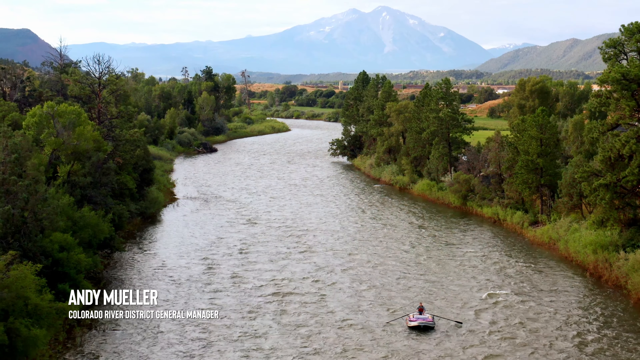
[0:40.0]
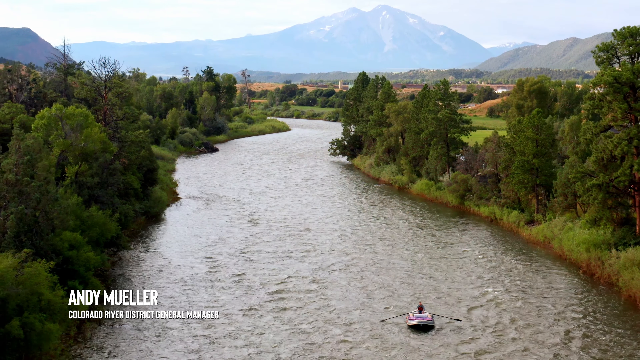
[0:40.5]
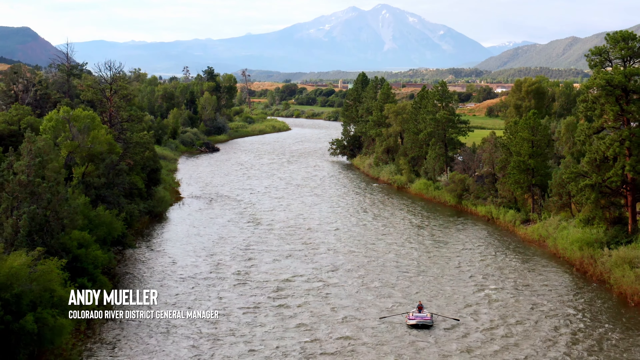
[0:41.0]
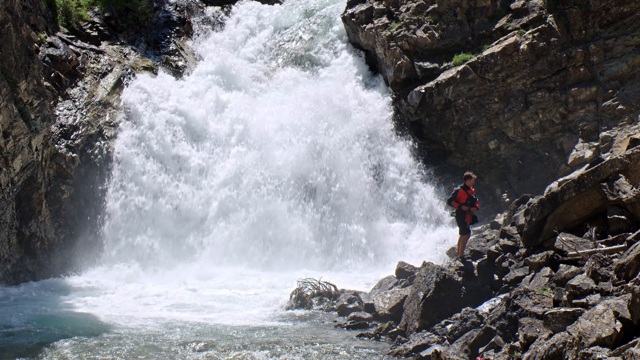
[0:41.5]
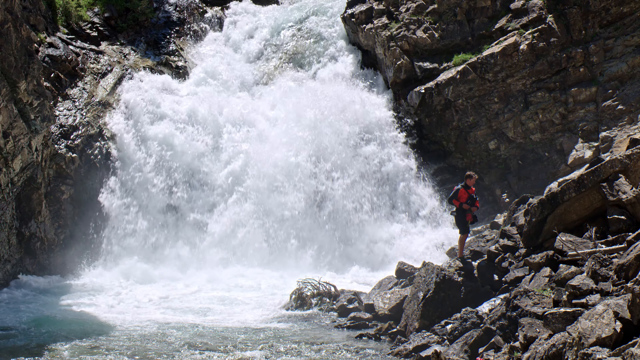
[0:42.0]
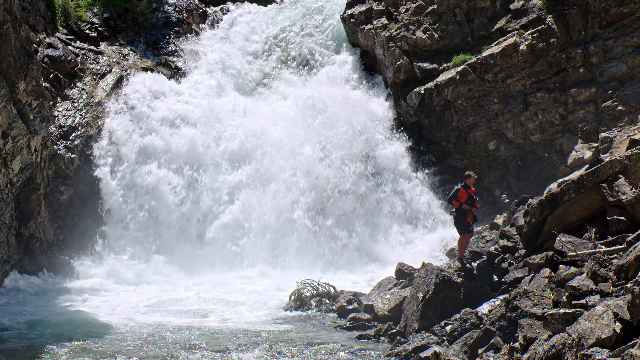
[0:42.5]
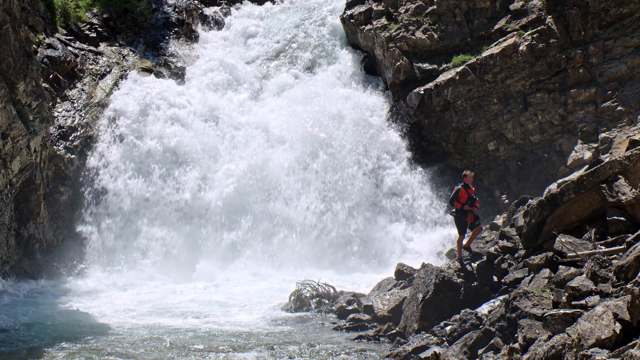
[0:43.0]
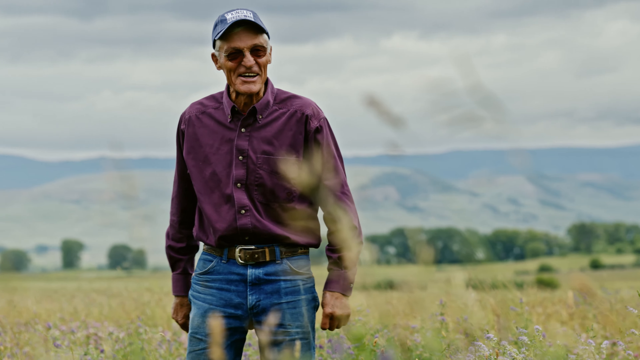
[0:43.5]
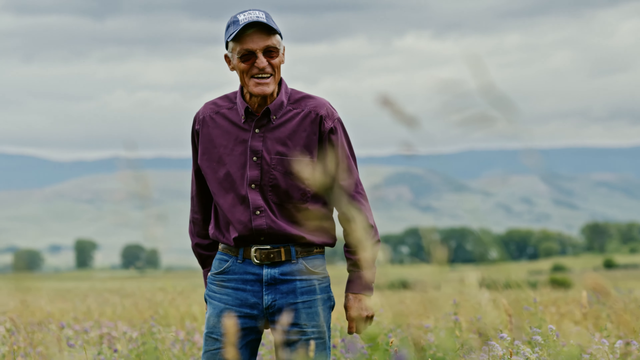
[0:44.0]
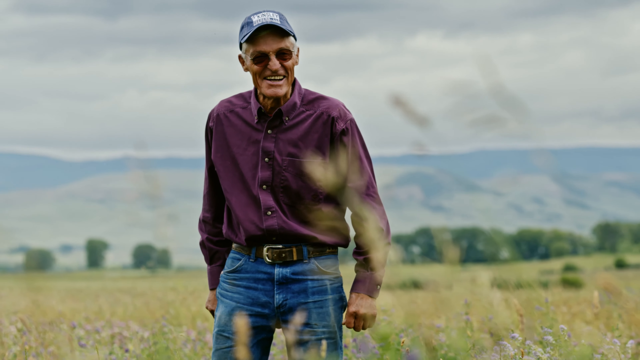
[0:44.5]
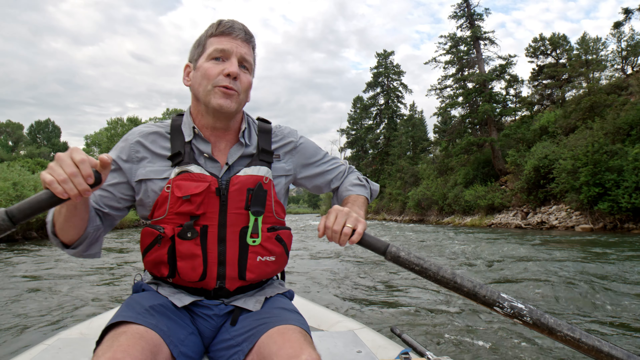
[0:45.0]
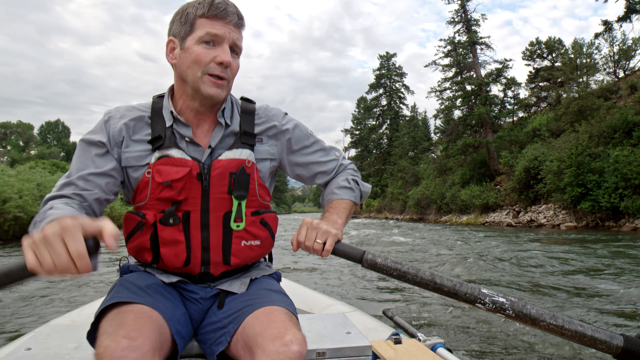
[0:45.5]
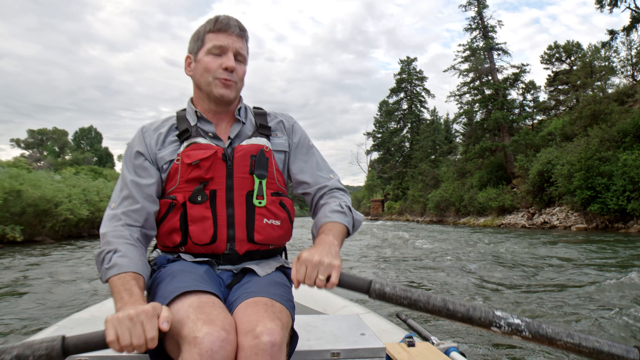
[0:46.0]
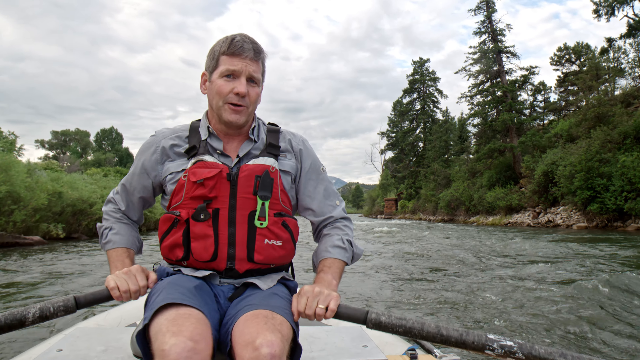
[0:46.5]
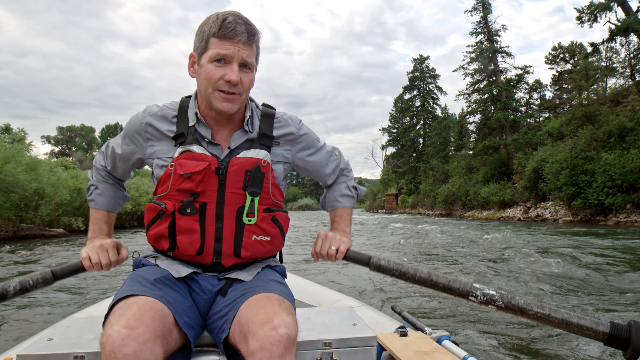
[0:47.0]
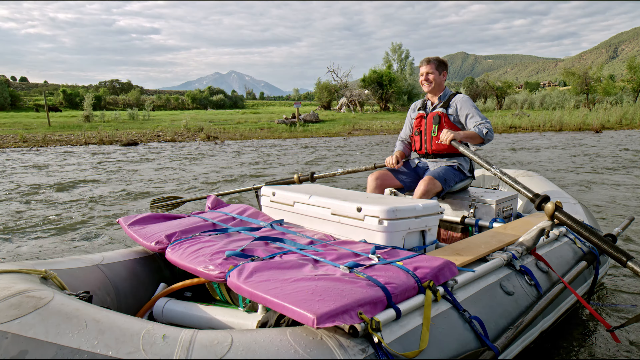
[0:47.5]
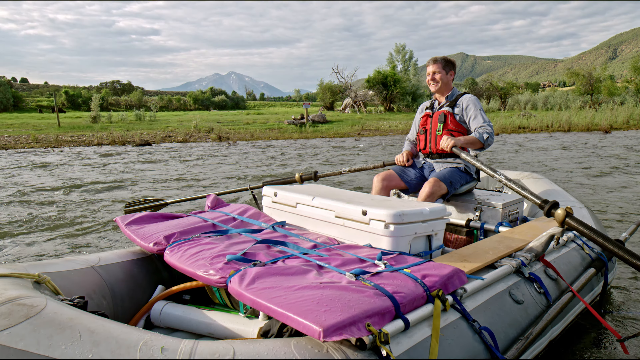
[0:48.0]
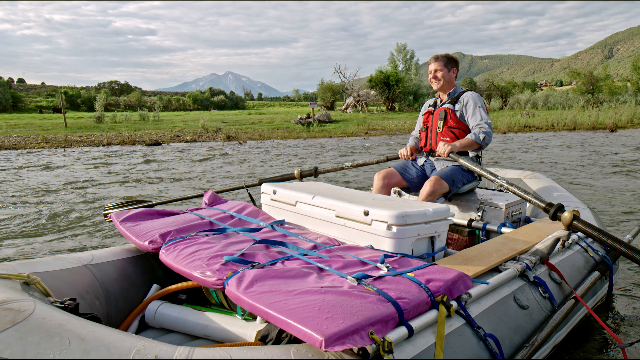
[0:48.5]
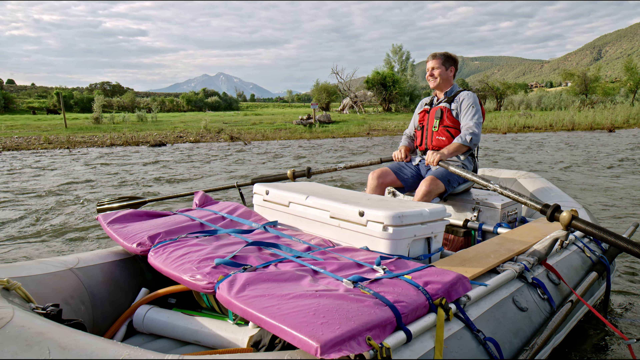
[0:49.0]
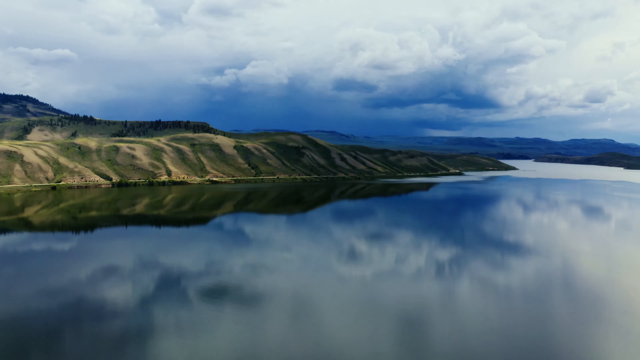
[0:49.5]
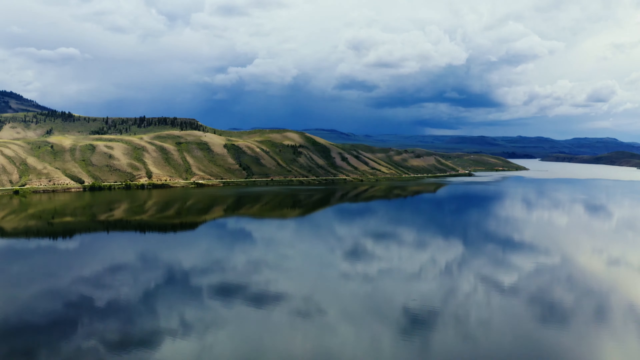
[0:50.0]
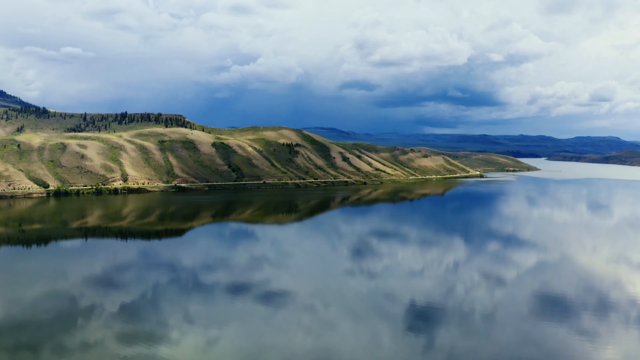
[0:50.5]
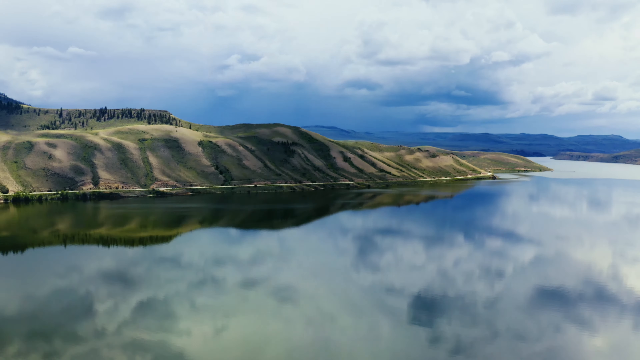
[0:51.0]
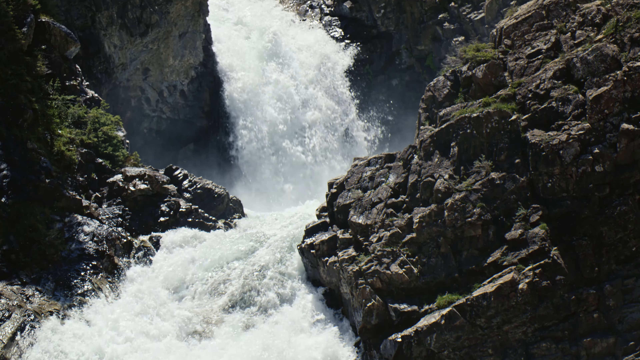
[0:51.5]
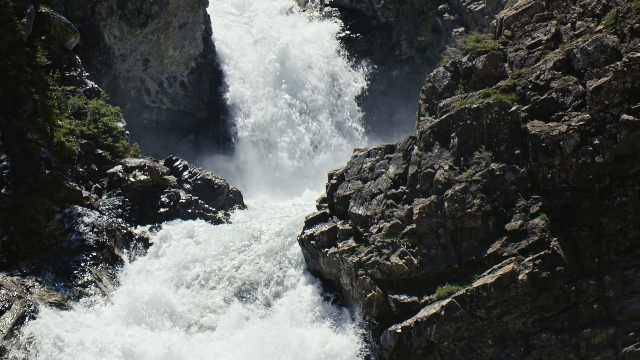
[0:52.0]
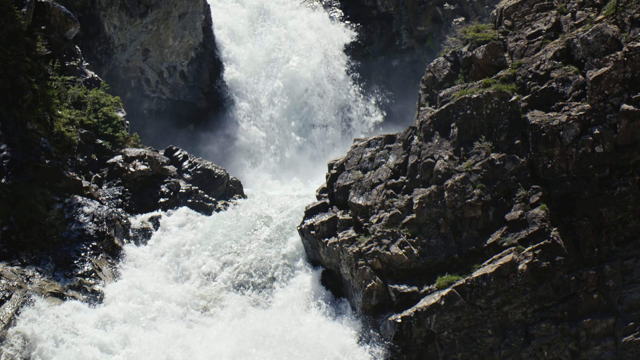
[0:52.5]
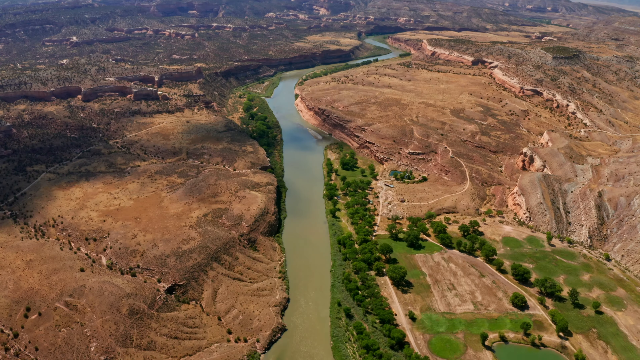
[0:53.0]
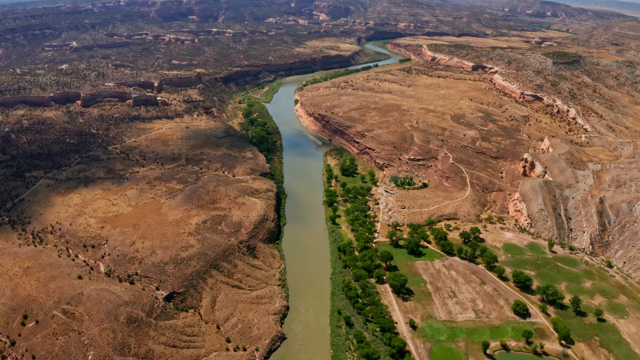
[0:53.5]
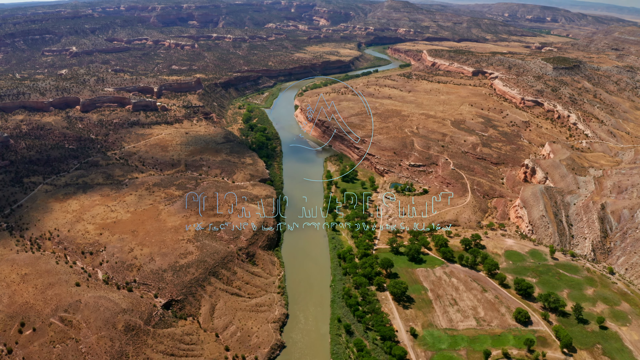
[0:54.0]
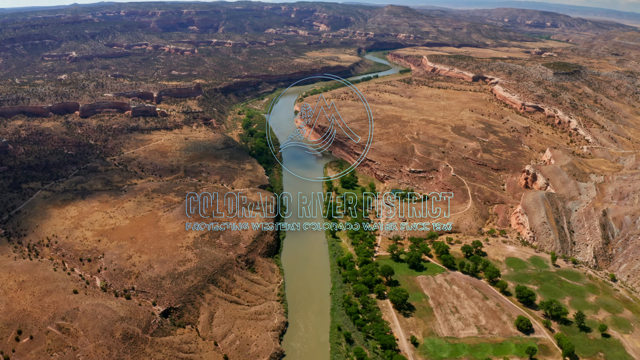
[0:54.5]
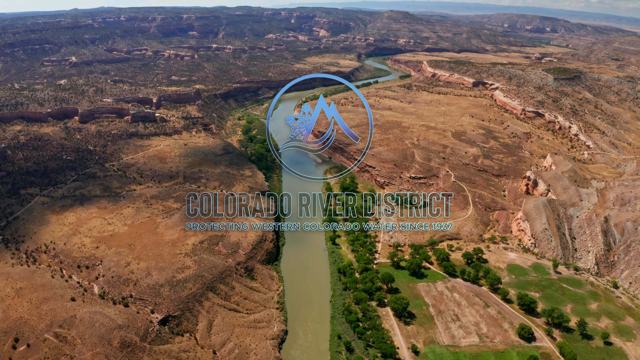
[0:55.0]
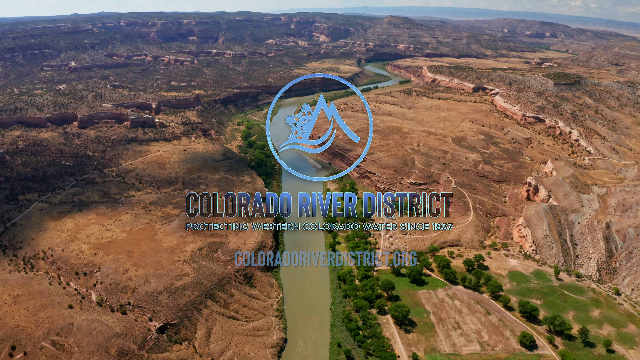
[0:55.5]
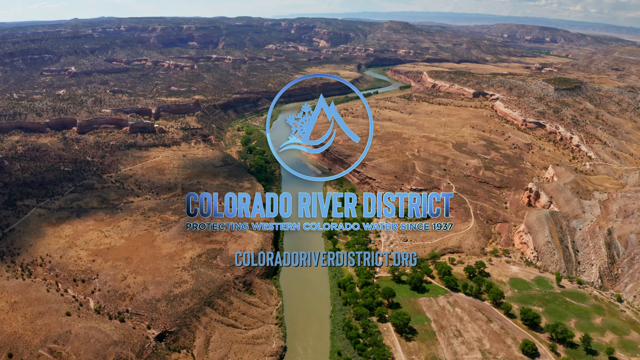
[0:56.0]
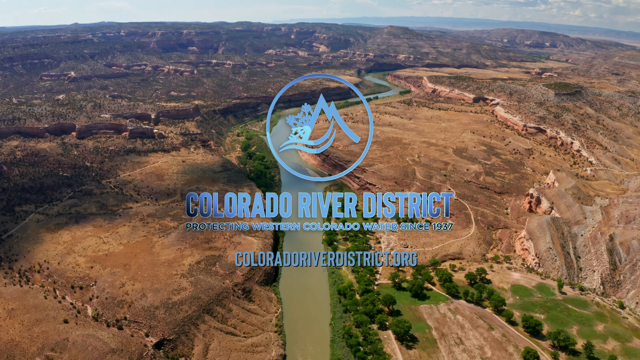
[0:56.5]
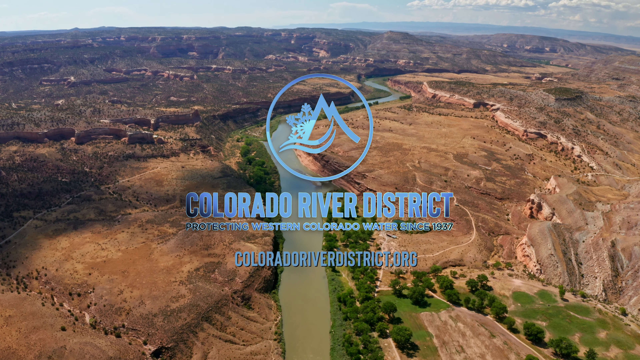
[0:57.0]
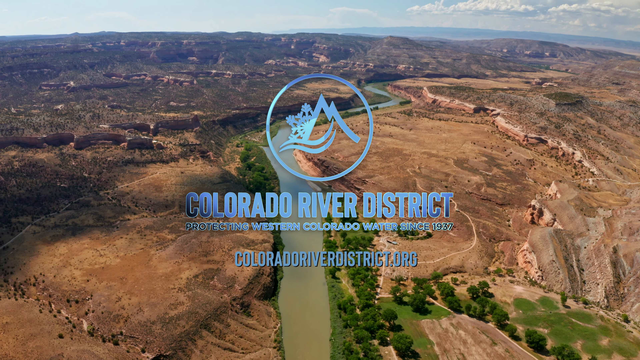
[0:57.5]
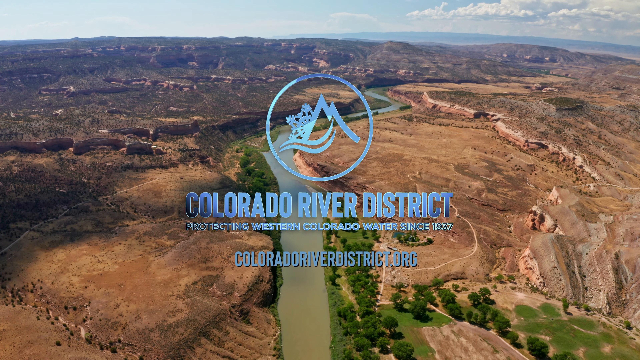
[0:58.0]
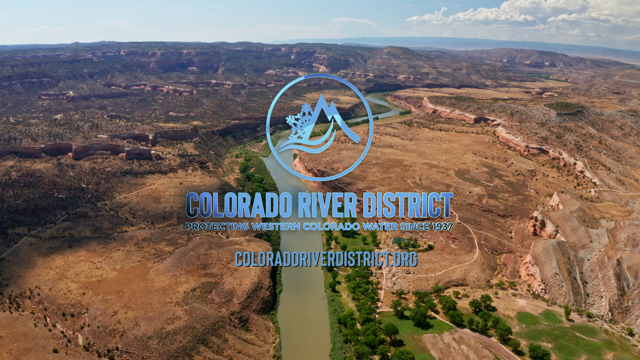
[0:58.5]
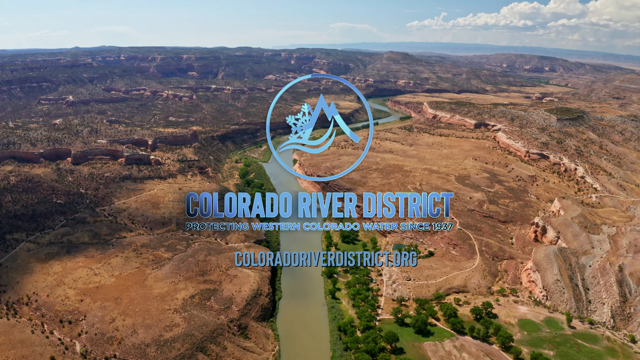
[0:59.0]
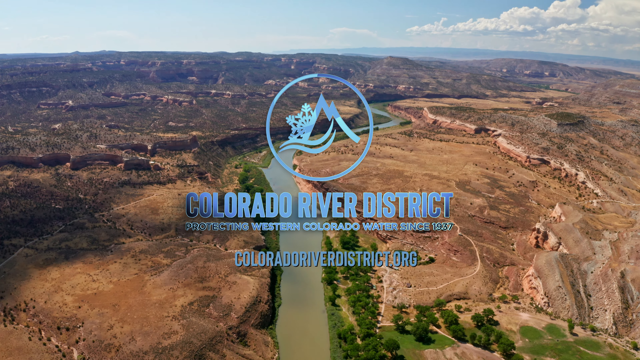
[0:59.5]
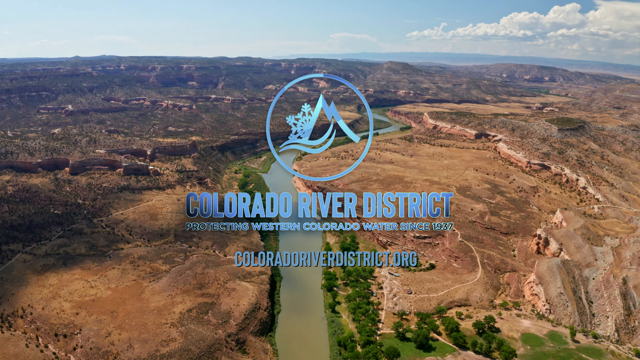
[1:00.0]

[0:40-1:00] A canoer on a large inflatable goes down a medium-sized river, filmed in a drone shot from behind him. Text in the bottom left corner reads "Andy Mueller, Colorado River District General Manager". The landscape has a little bit of a mountain and lots of trees on either side. The video switches to a big whitewater waterfall with a bunch of rocks and a man standing on the rocks next to it. Next, an elderly man in a purple button-up shirt, a blue hat, sunglasses and blue jeans is outdoors in a field. The video switches back to Mueller, in a red life vest, shorts and a button-up shirt, on the large inflatable canoe on the river, talking to the camera. A better shot of his canoe shows some purple raft or protection and lots of things in the inflatable as it goes down the river. A drone shot shows a large, calm, placid body of water with lots of hills and clouds moving through. A waterfall comes down over rocks, followed by a very high drone shot of a winding river with vegetation and rocks on either side. The logo fades in again as a metallic blue overlay with a mountain, a snowflake and something like wind in a circle, and underneath it reads "Colorado River District, protecting western Colorado water since 1932, coloradoriverdistrict.org".